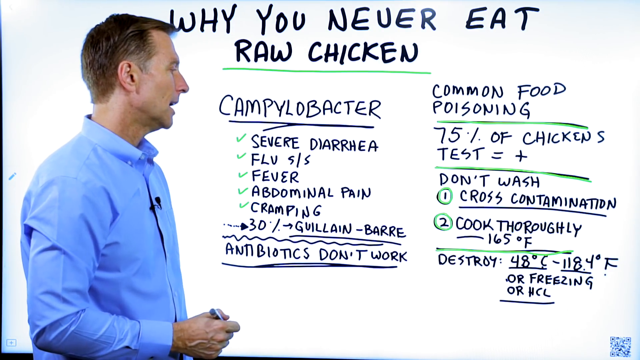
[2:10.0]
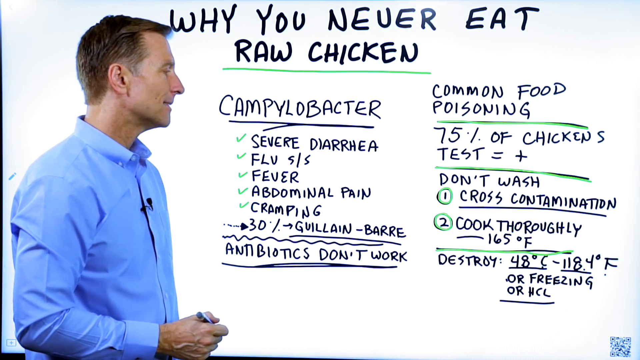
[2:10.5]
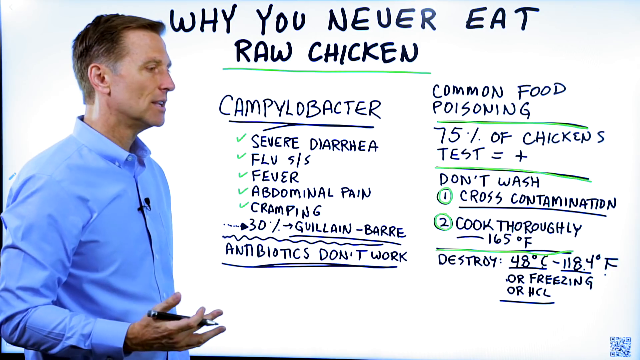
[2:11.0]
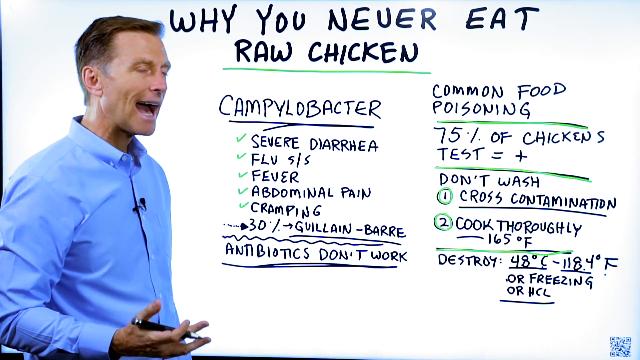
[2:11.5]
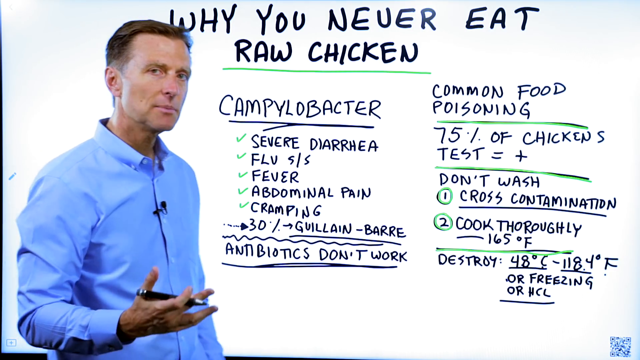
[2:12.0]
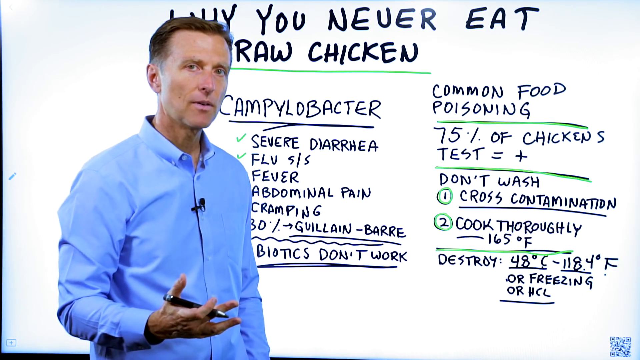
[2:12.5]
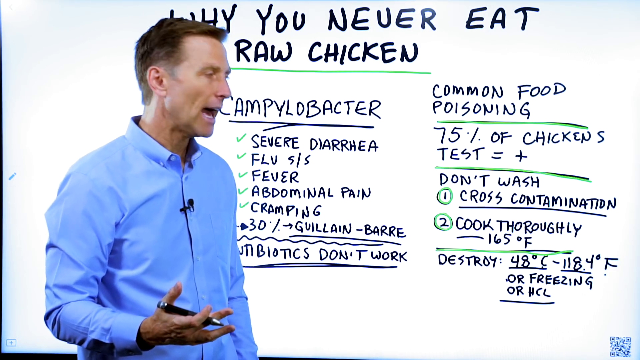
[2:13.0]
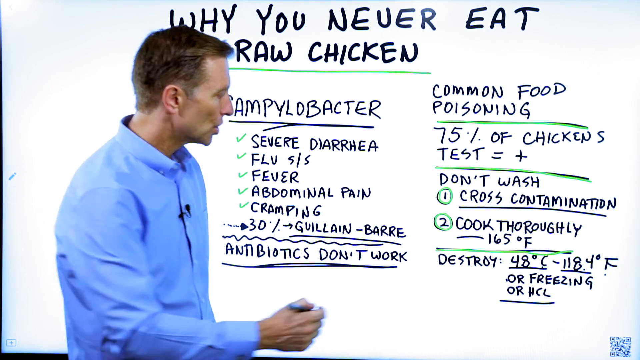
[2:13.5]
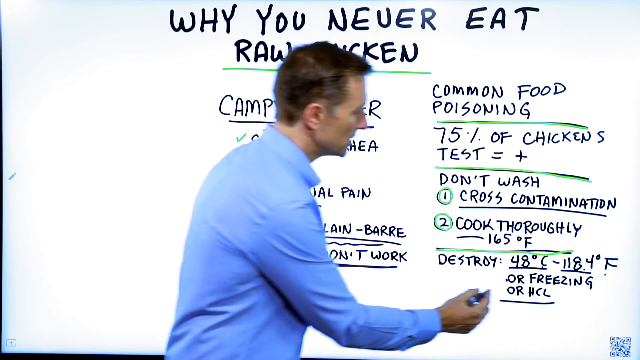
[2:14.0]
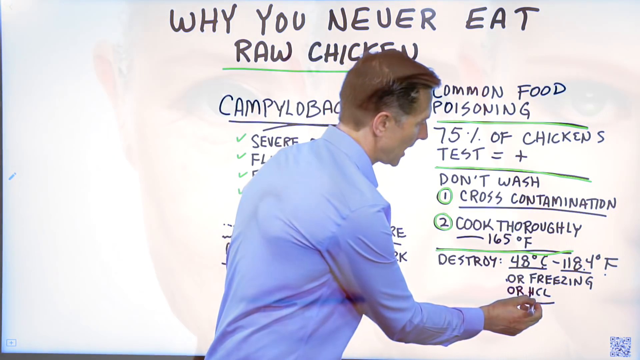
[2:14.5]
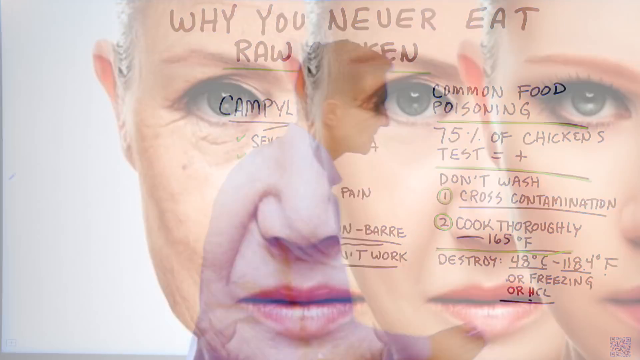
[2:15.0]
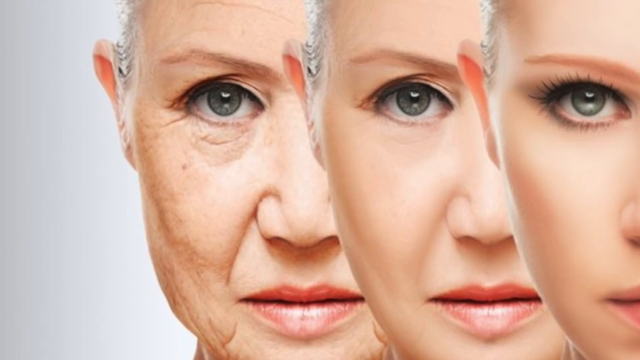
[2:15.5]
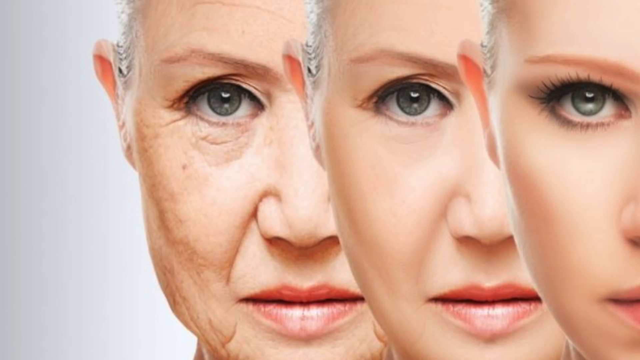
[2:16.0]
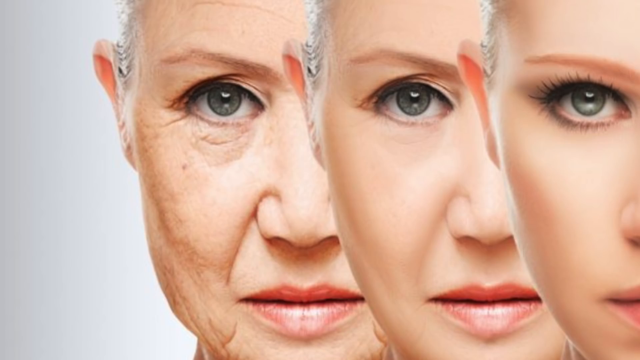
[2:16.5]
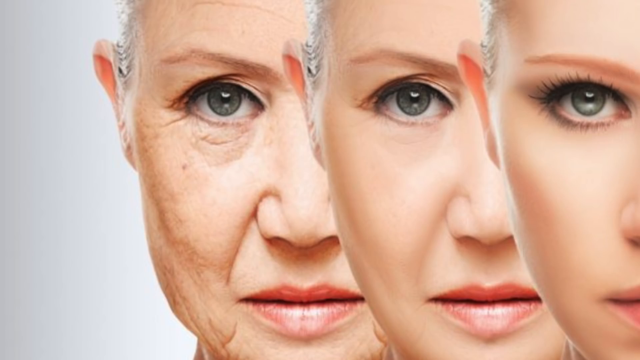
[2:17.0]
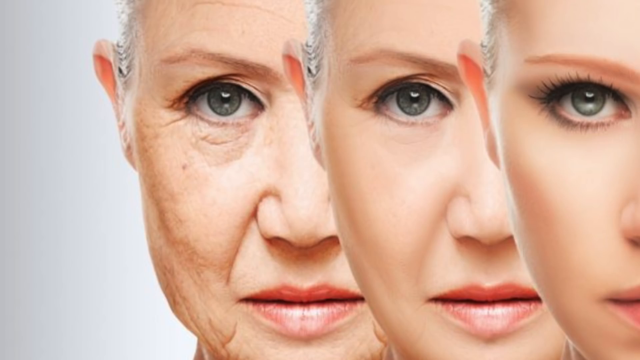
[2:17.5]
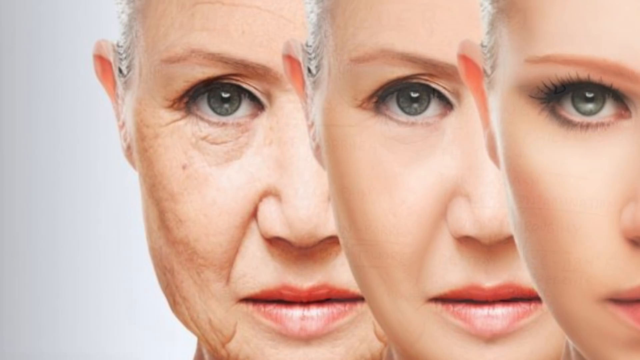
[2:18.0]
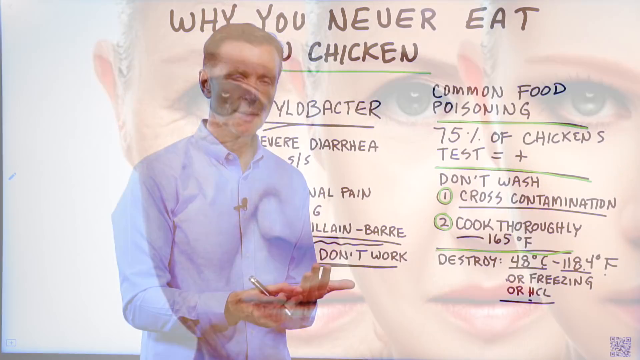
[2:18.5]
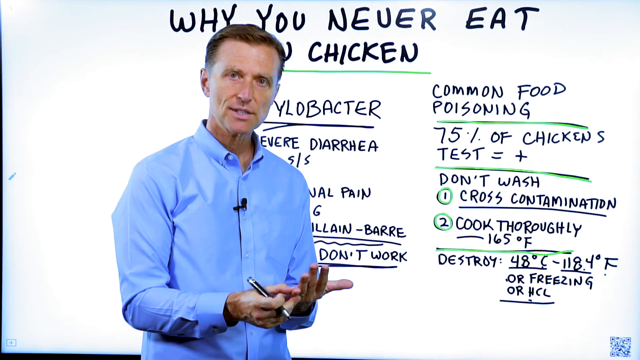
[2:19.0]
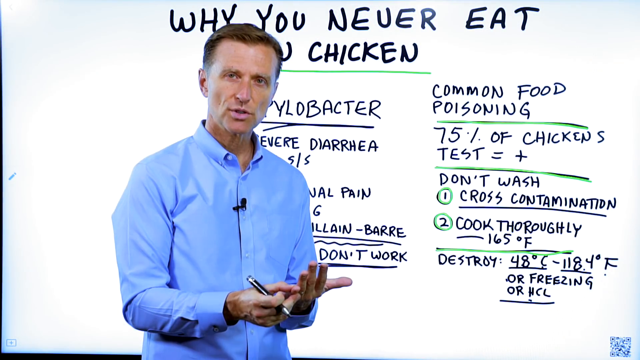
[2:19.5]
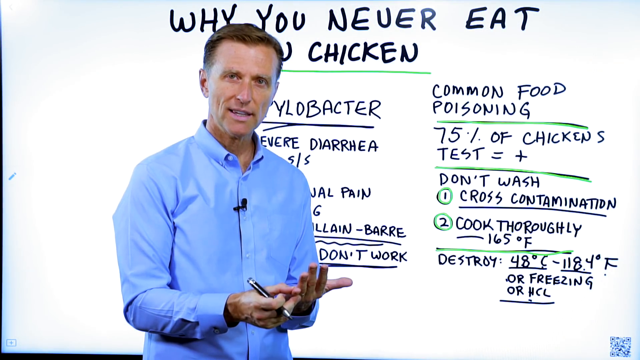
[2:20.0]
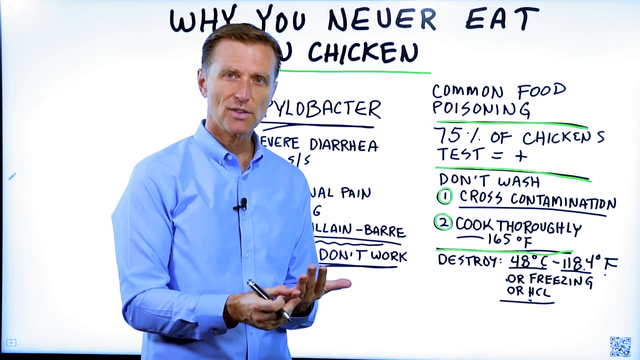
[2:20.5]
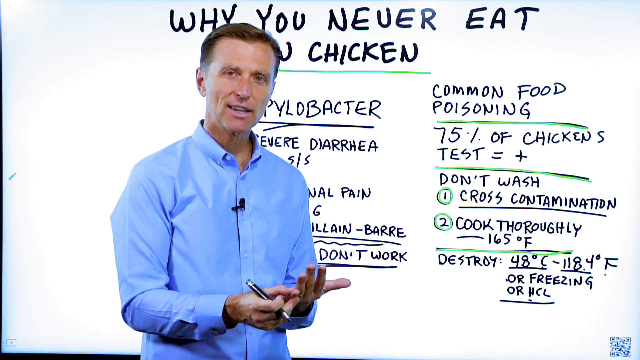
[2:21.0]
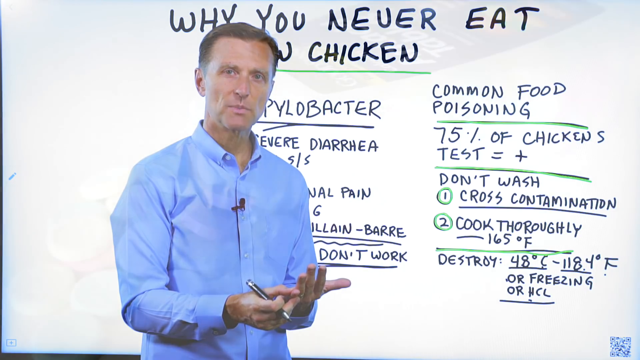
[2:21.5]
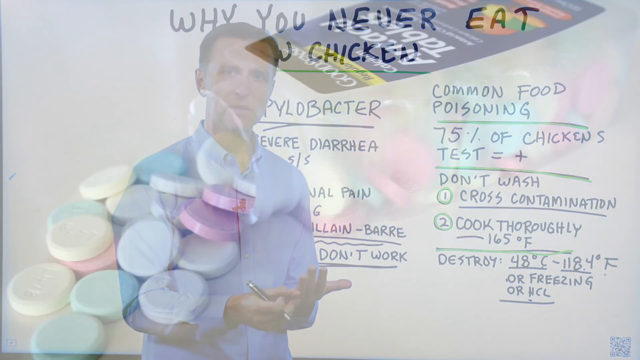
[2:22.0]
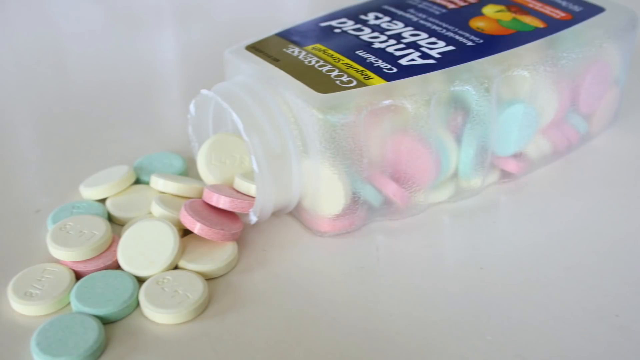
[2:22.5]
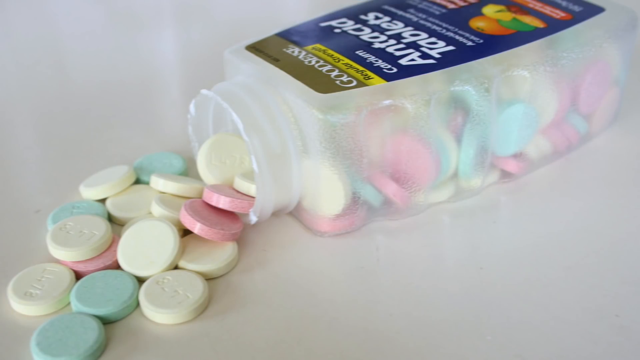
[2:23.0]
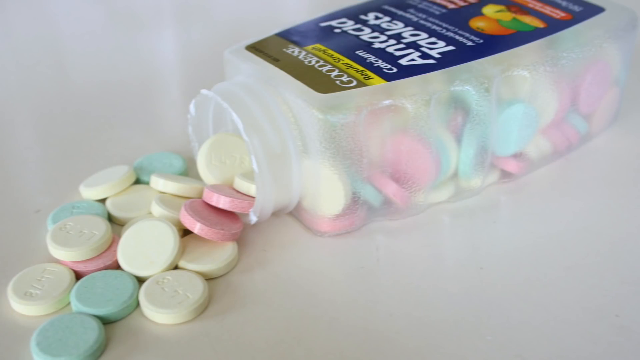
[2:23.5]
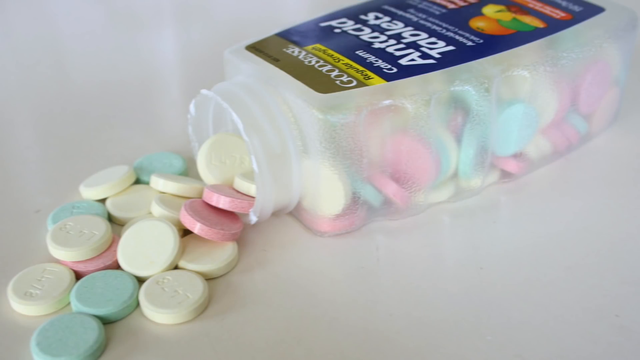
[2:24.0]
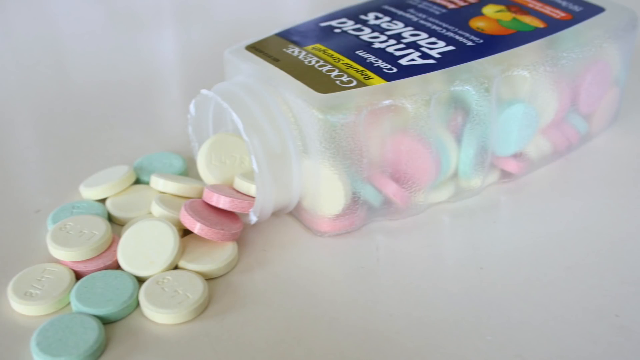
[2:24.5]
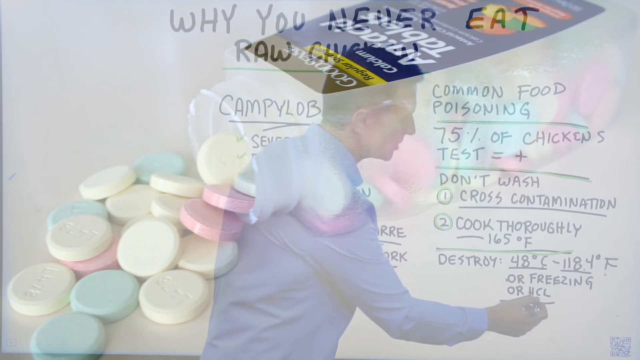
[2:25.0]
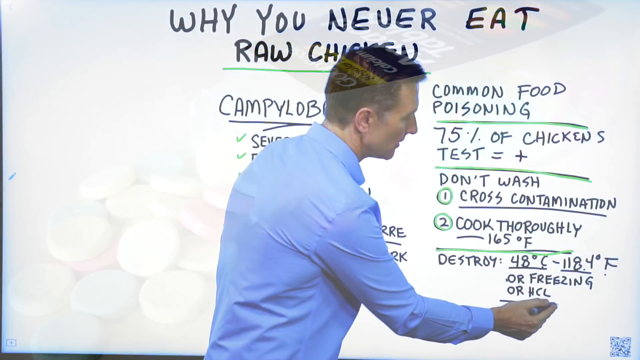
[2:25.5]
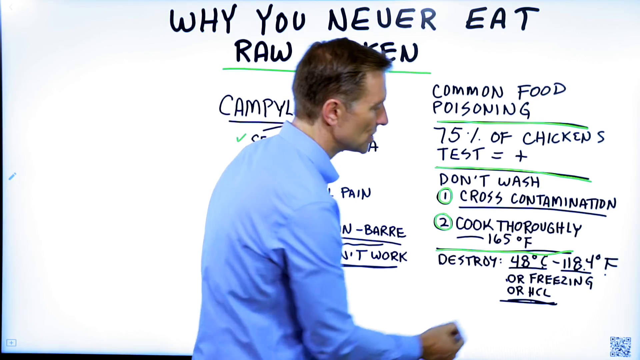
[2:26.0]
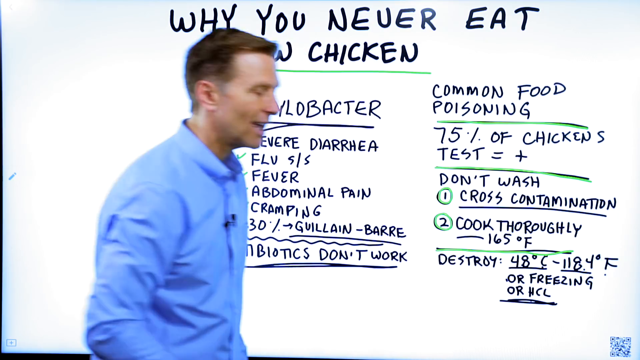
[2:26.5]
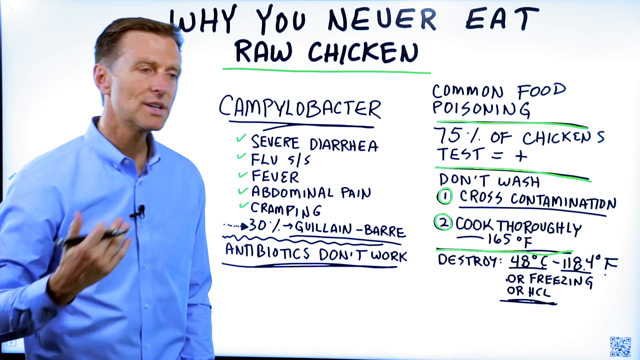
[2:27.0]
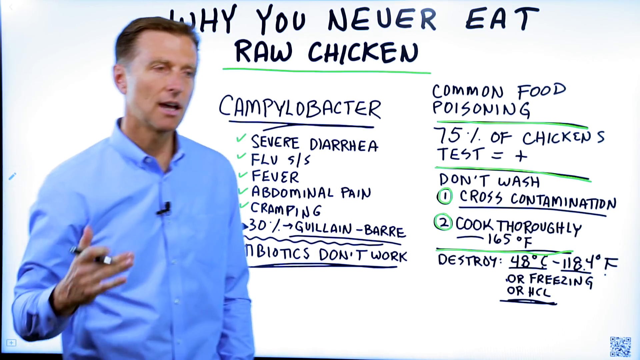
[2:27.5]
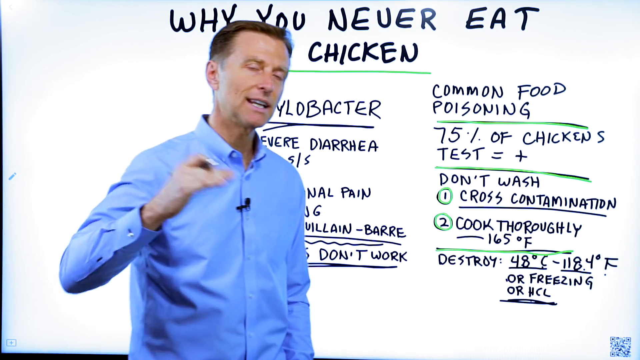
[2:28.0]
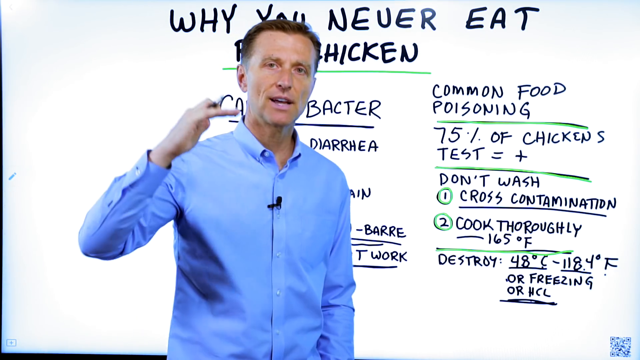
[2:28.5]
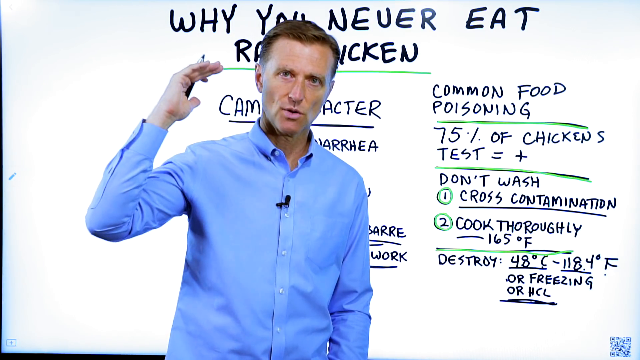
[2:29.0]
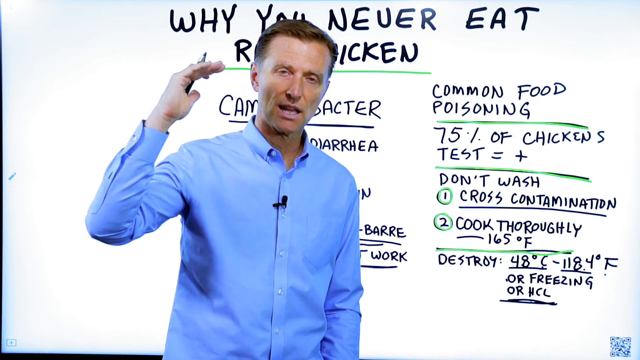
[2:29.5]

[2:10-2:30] The teacher is shown again, underlining something on the whiteboard. Next, a picture shows three faces, which look like the same person at different ages. The teacher is shown again, followed by pills on screen: yellow, red and green pills, with writing that includes "Calcium". The teacher is shown again, pointing at the whiteboard. Lastly, a picture shows a man wearing a white T-shirt holding his stomach with both hands.